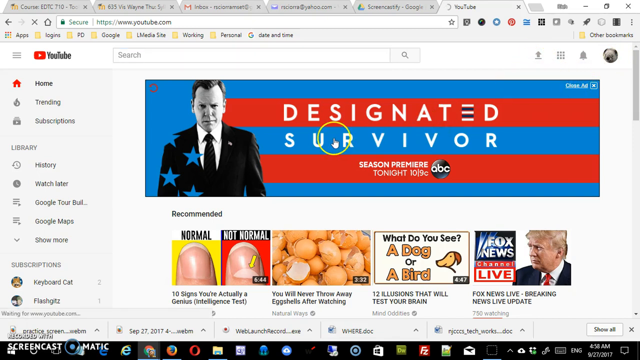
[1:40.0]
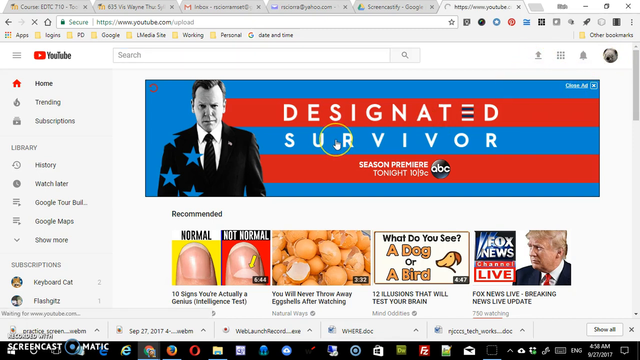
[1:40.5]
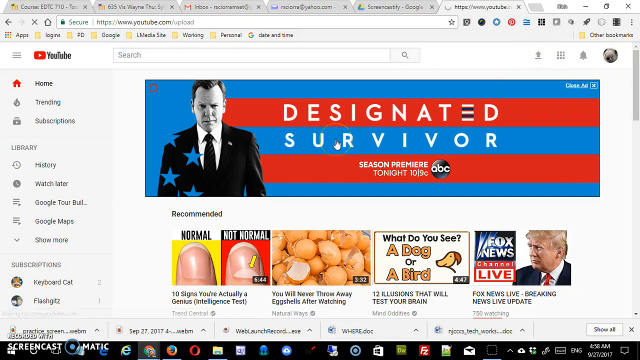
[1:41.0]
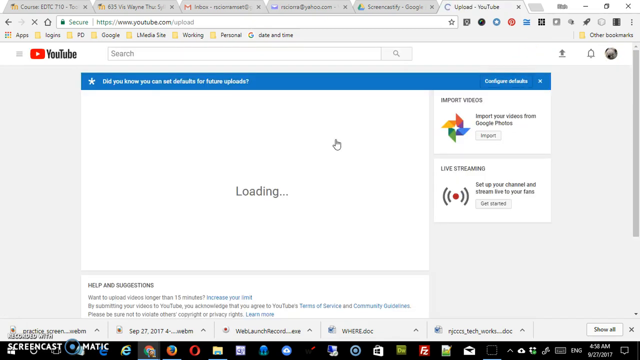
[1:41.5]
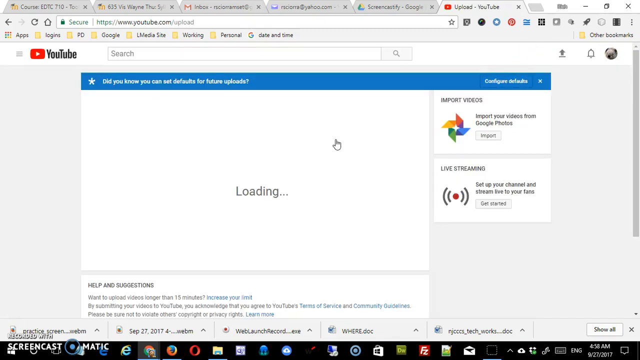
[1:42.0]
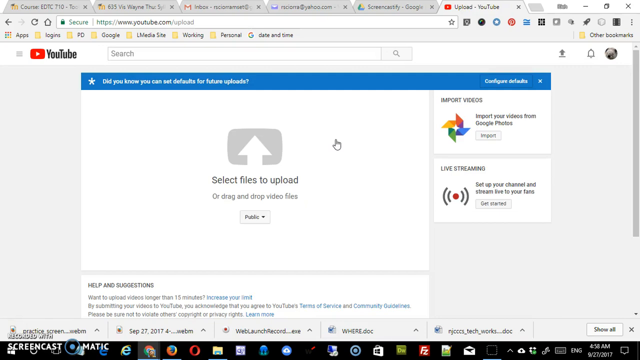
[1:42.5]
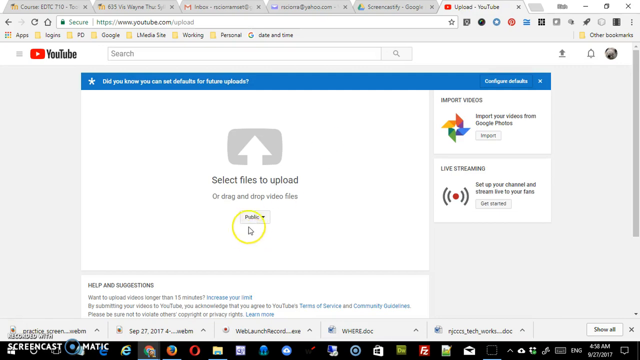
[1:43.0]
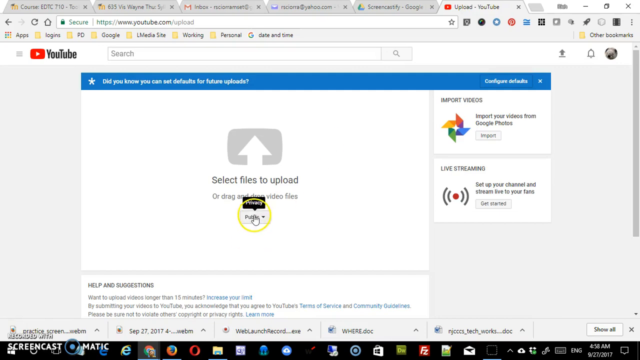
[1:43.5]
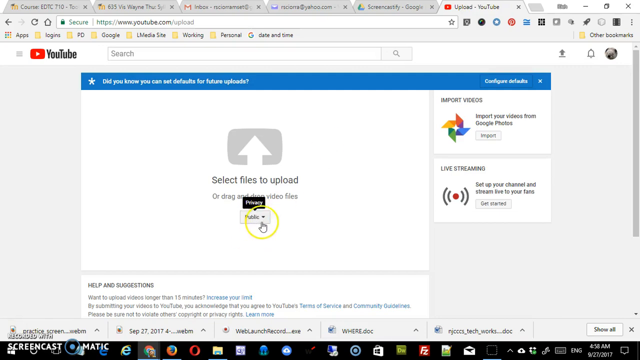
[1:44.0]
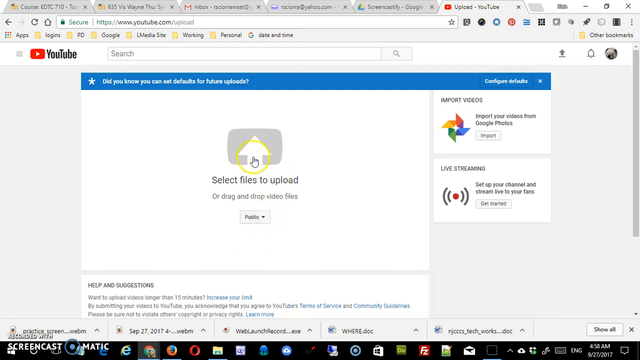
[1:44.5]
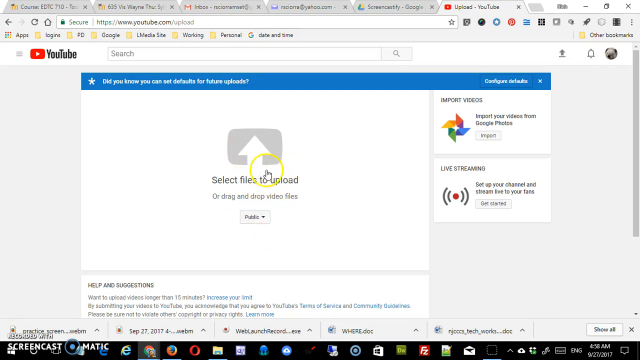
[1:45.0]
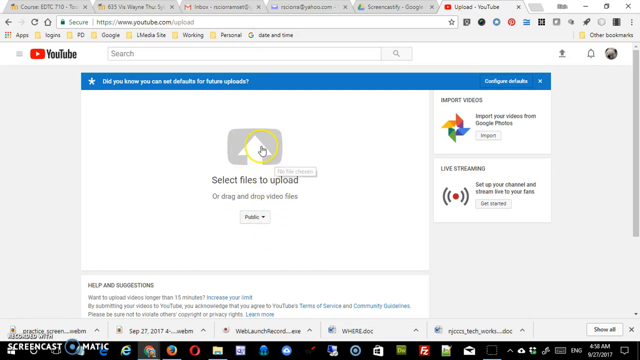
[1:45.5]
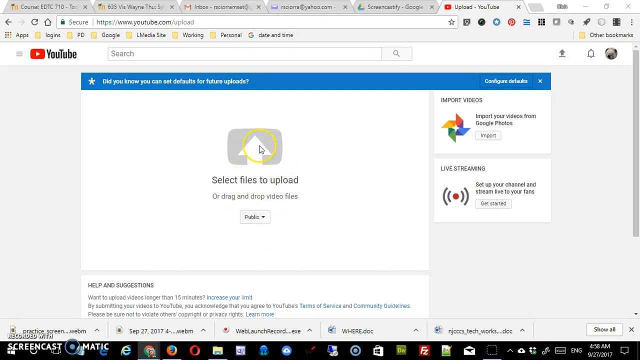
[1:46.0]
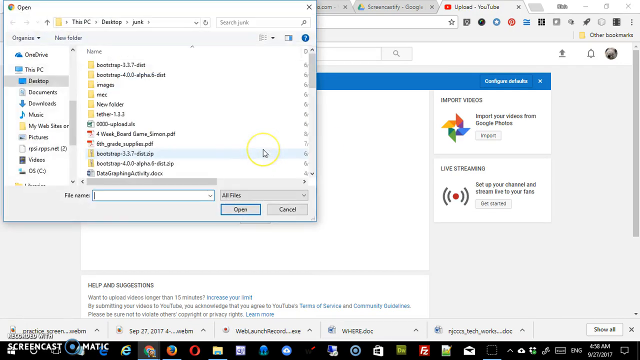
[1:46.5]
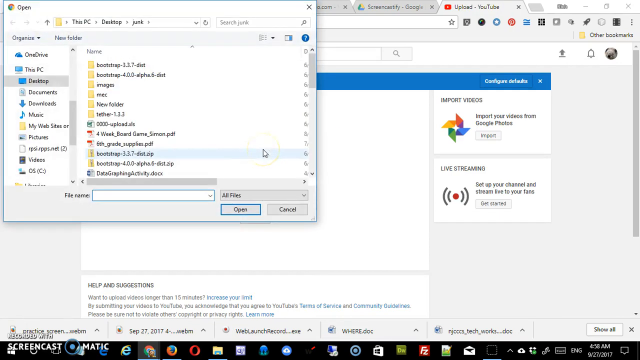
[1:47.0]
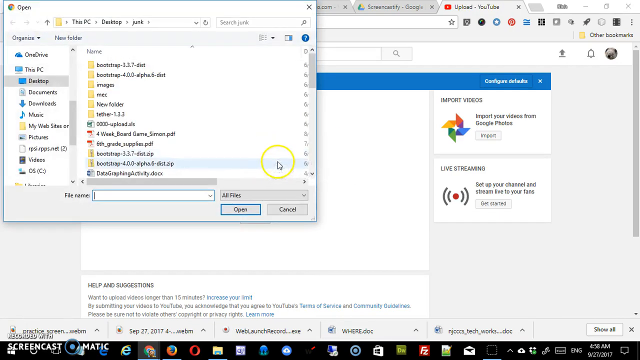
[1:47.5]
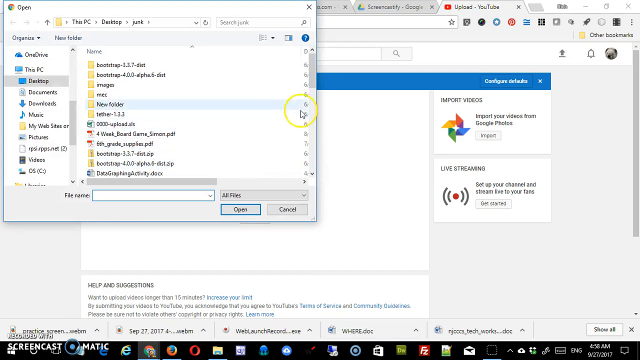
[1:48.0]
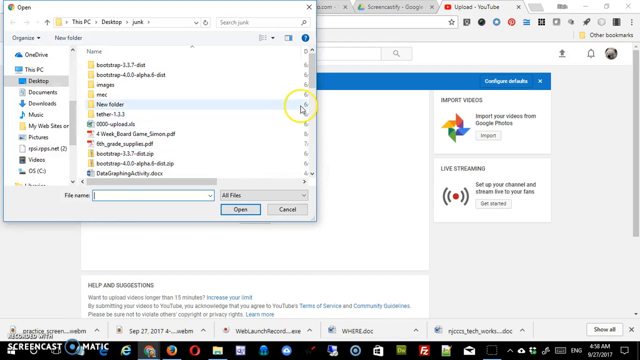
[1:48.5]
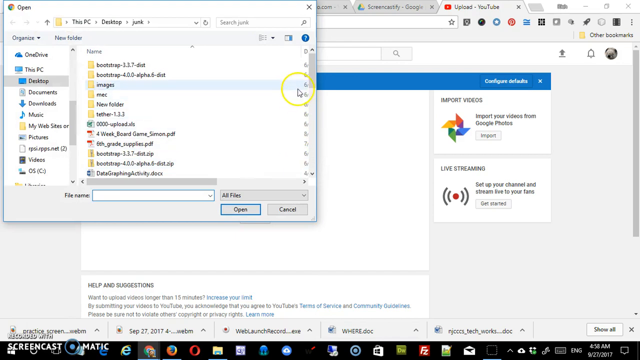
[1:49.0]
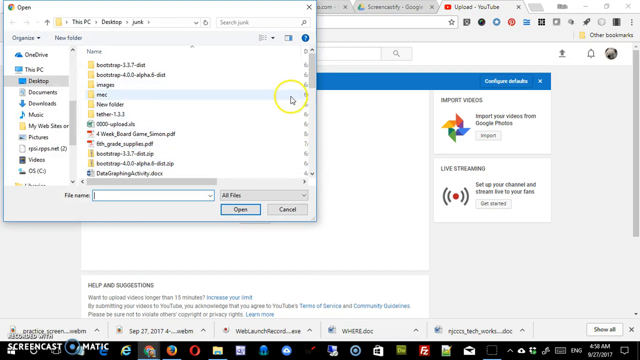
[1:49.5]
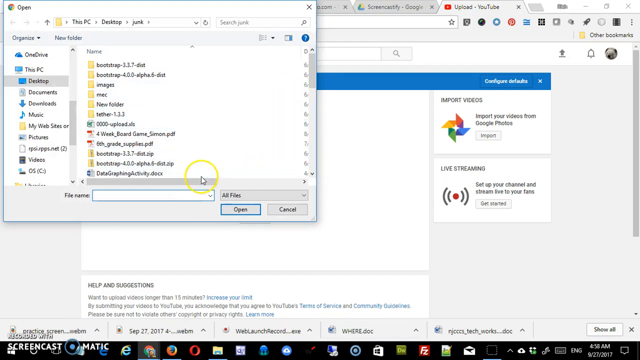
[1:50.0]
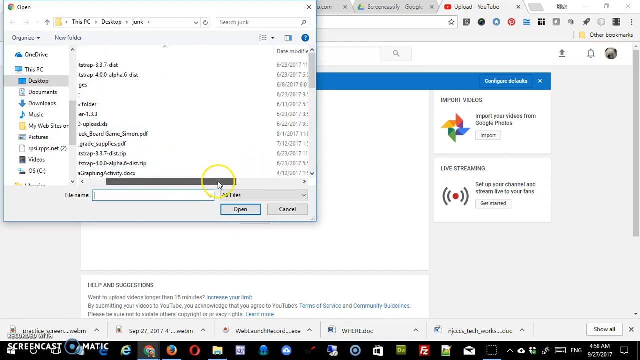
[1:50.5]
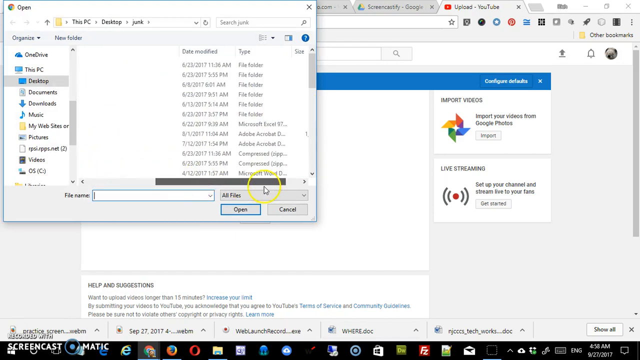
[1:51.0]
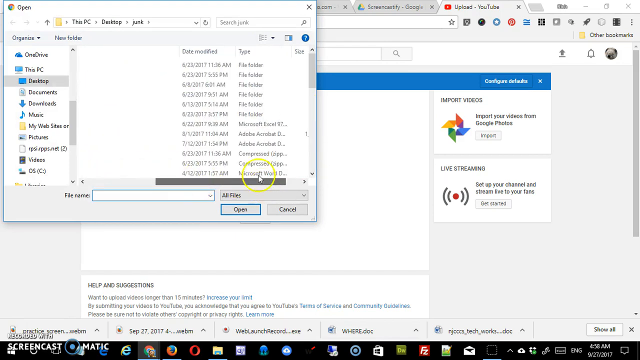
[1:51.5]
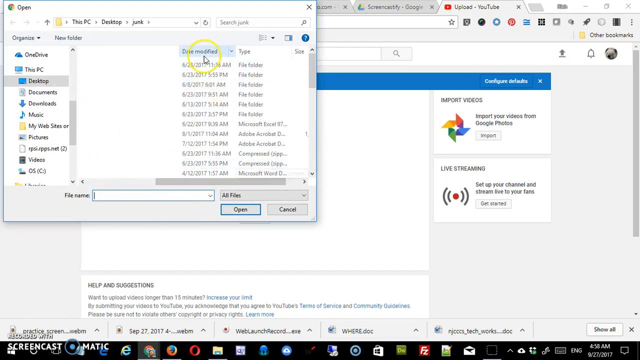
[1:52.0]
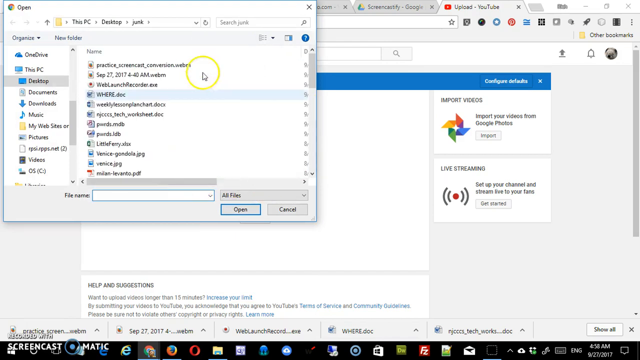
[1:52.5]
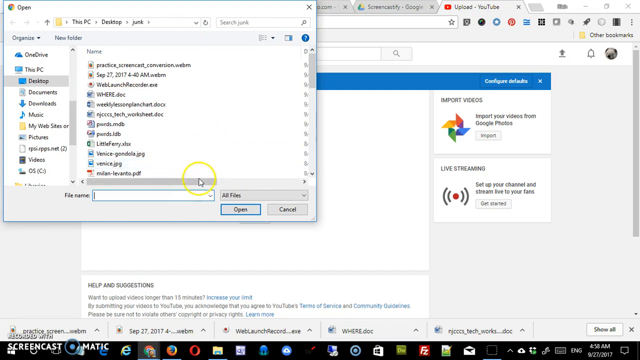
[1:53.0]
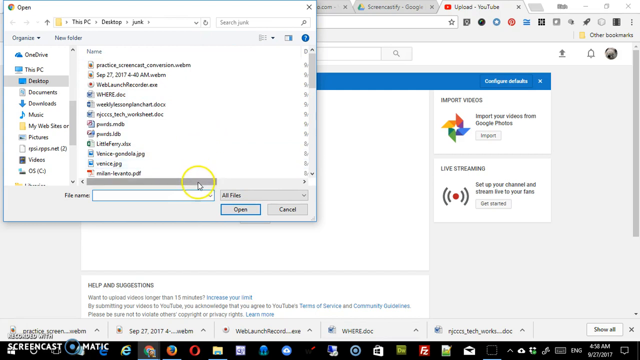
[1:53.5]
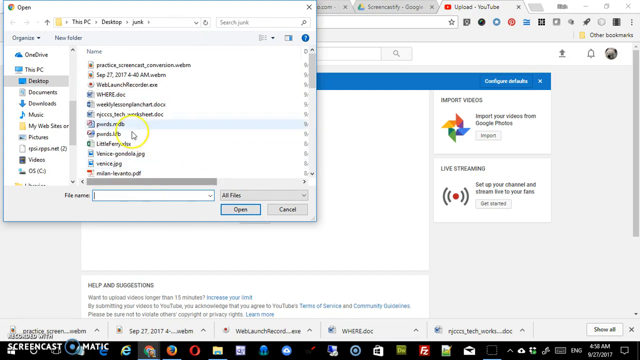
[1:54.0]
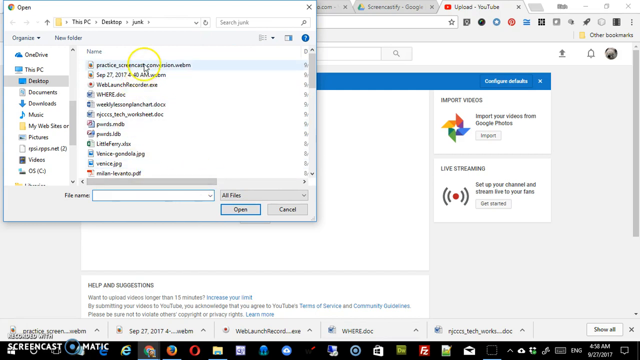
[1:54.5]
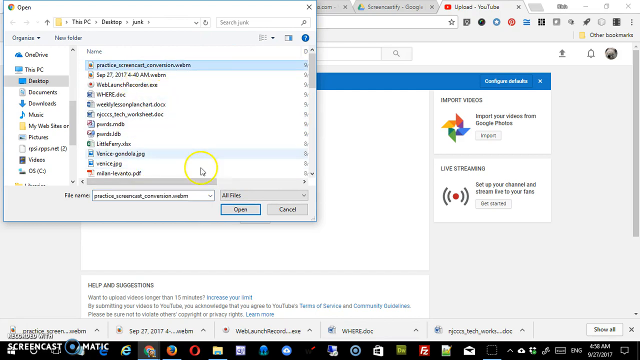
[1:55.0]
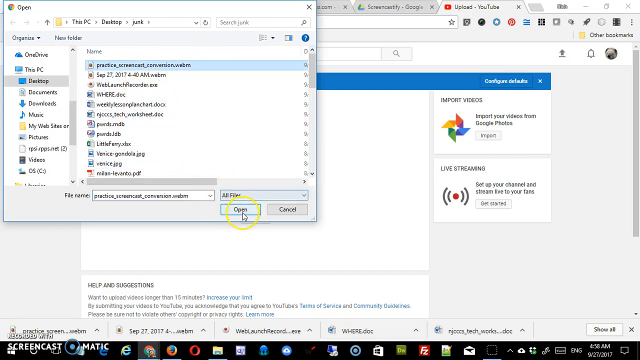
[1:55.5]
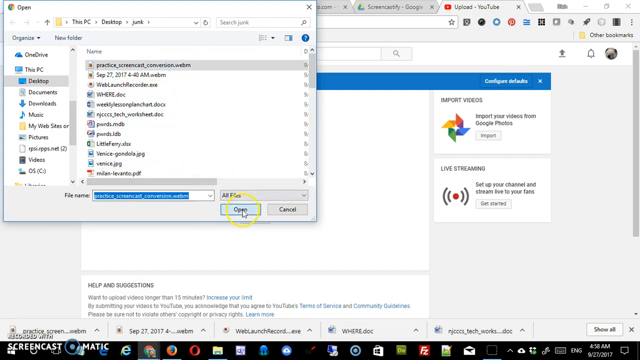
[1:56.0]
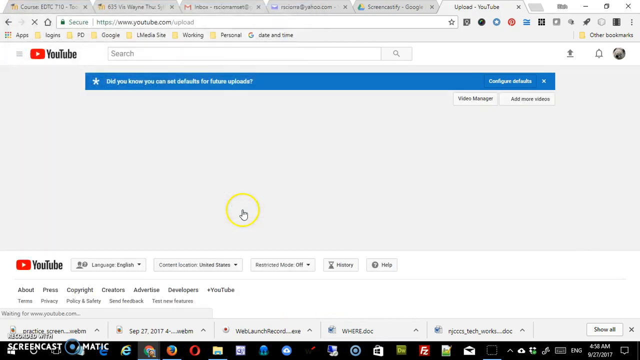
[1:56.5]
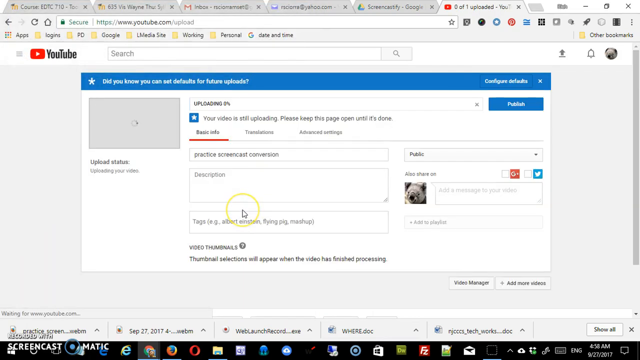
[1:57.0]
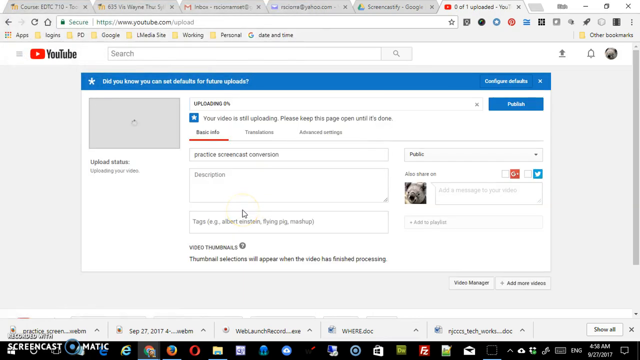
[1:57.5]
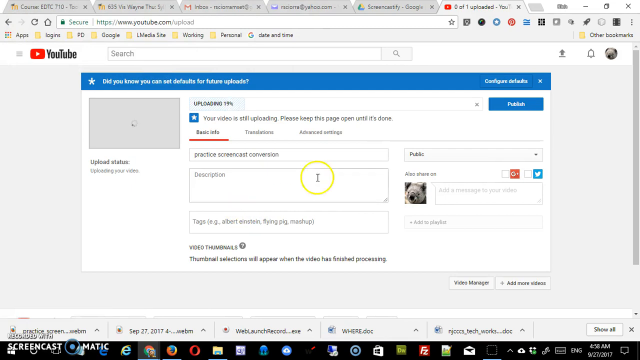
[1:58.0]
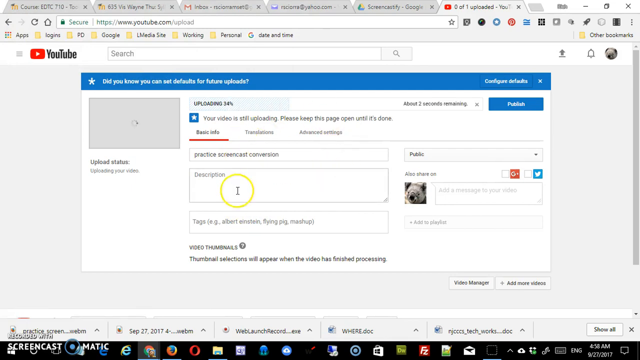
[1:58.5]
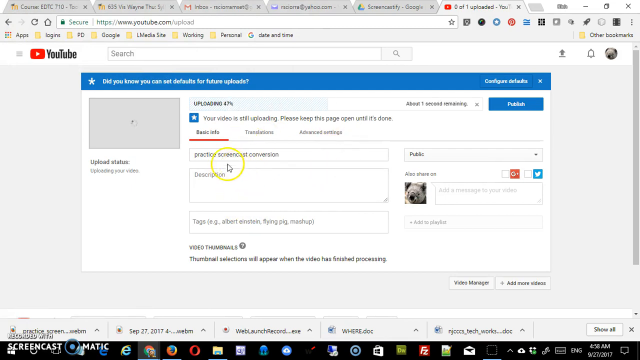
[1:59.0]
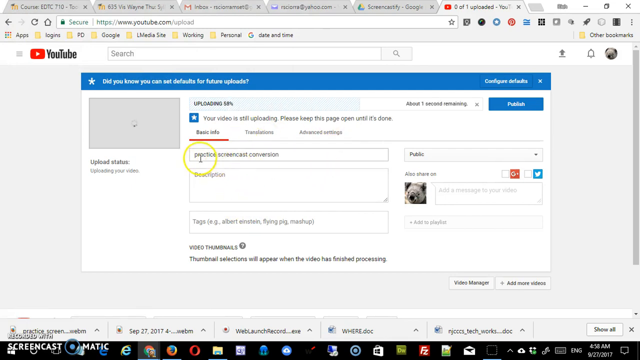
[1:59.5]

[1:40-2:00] A YouTube page shows recommended videos at the bottom: two small images of fingernails on the left, beside them a picture of what looks like potatoes, onions or some other kind of vegetables, beside that a video that says "what do you see dog or bird", and a Fox News live coverage video for Donald Trump. A large main advertisement fills the top for Designated Survivor, showing what looks like Kiefer Sutherland standing in a business suit. The person then moves the mouse around the screen, switches from that page to another page, and scrolls through folders, apparently to open a clip and add it to the YouTube account.